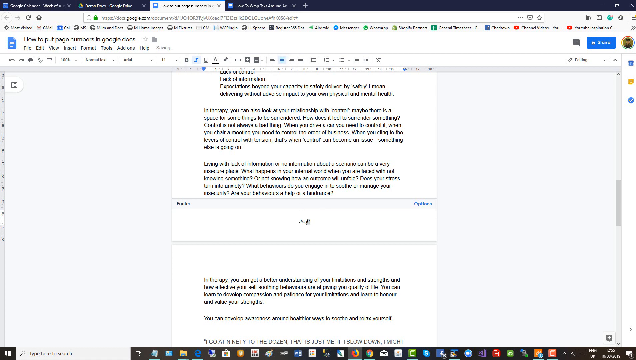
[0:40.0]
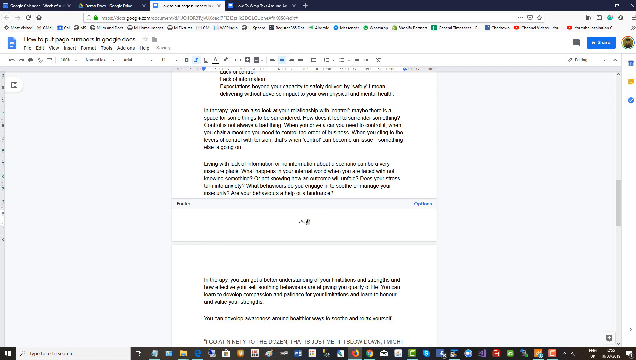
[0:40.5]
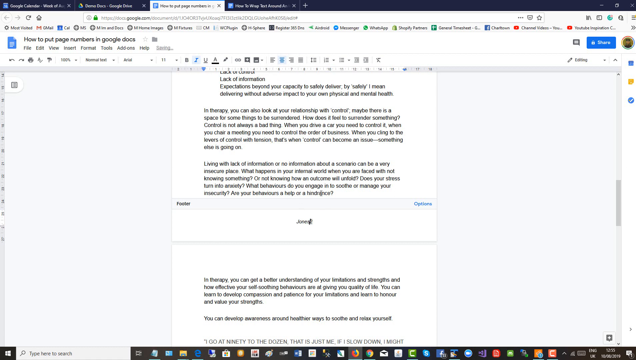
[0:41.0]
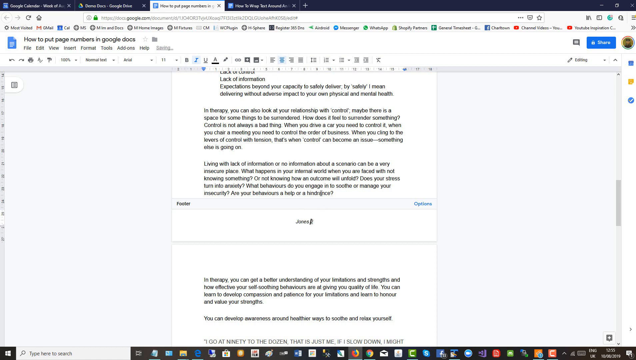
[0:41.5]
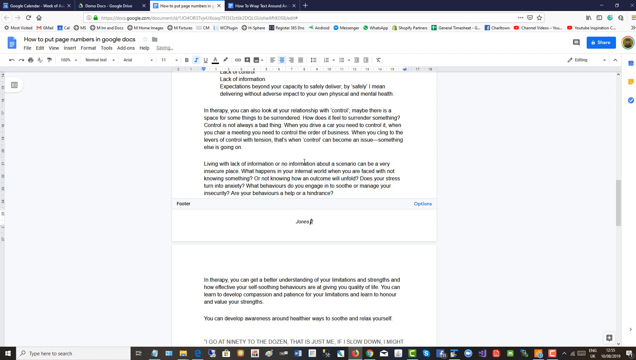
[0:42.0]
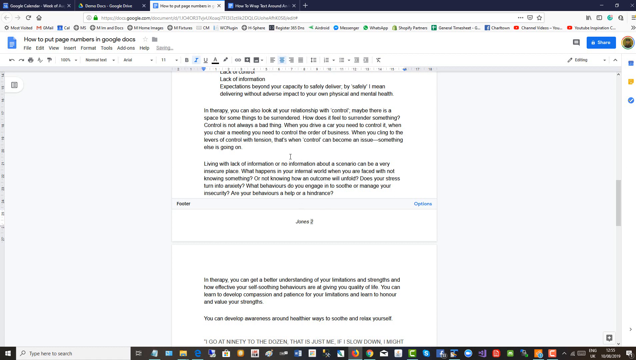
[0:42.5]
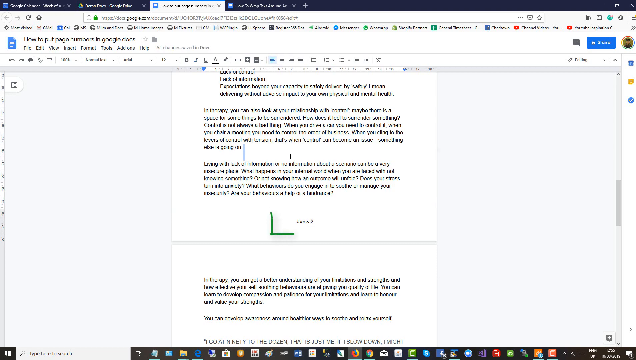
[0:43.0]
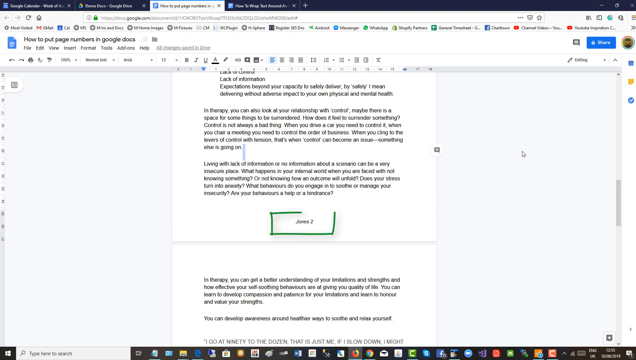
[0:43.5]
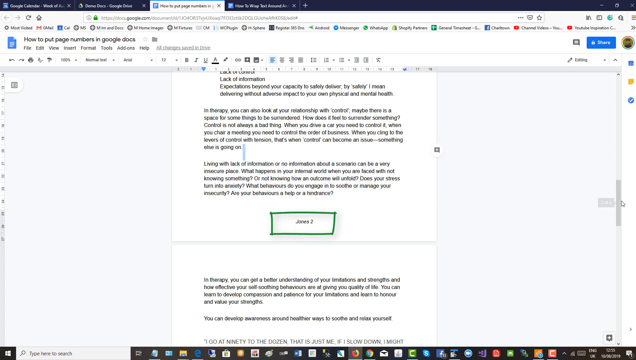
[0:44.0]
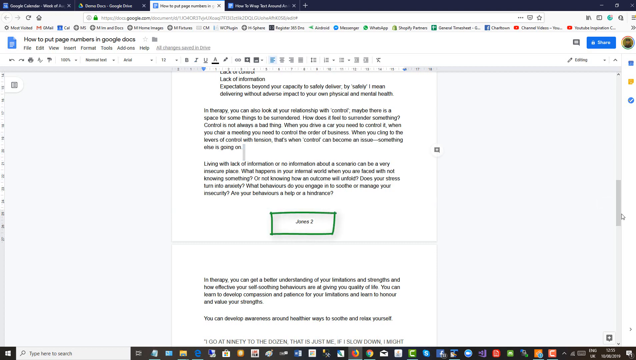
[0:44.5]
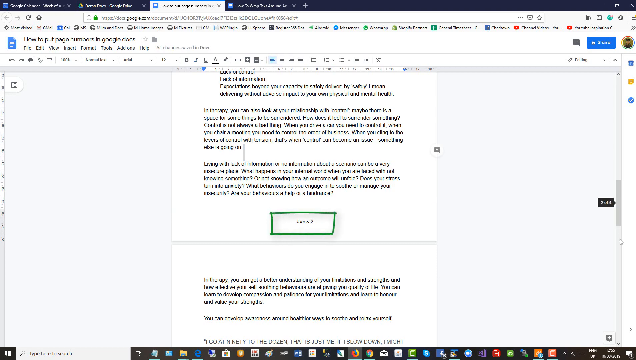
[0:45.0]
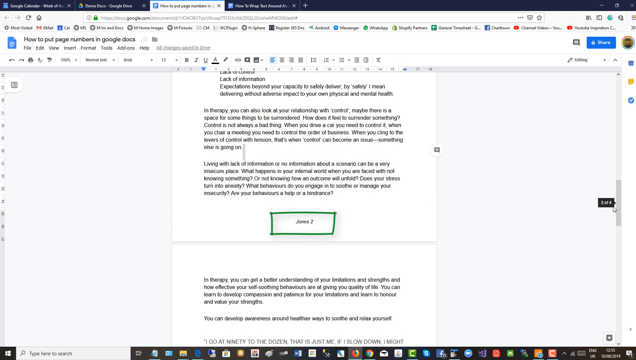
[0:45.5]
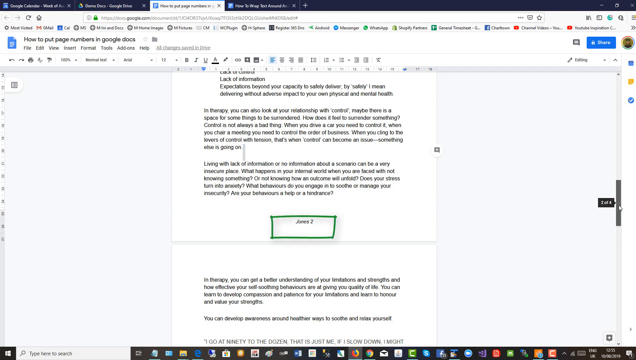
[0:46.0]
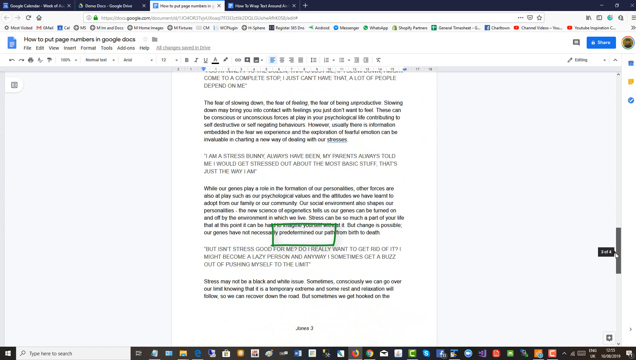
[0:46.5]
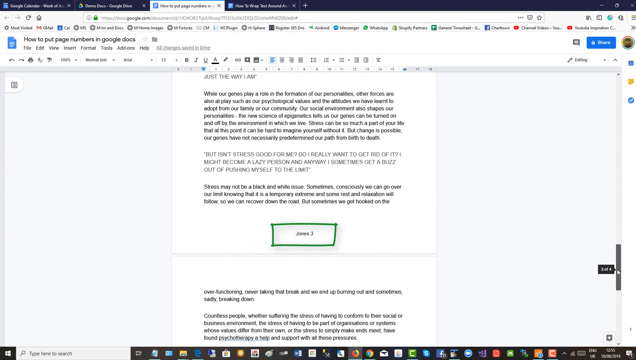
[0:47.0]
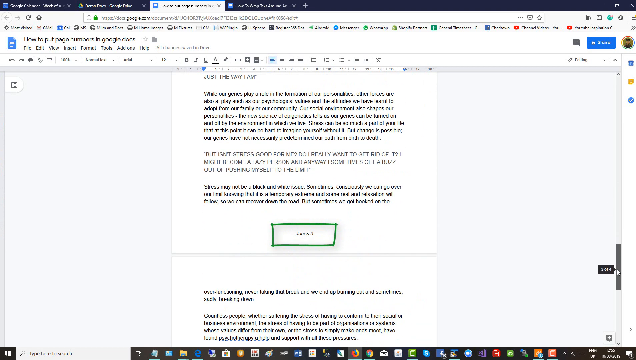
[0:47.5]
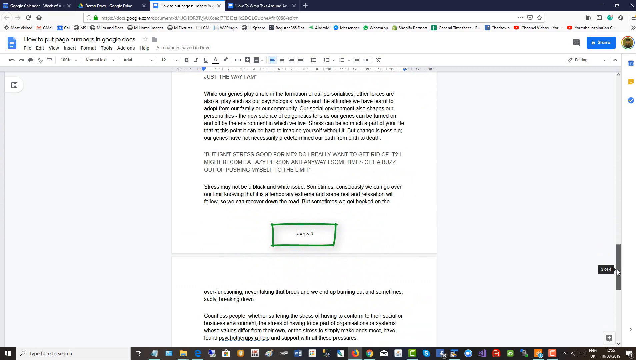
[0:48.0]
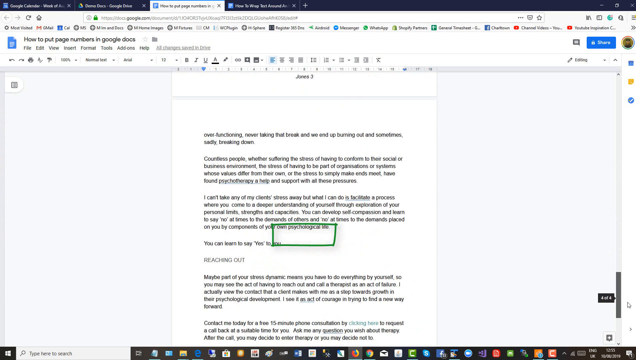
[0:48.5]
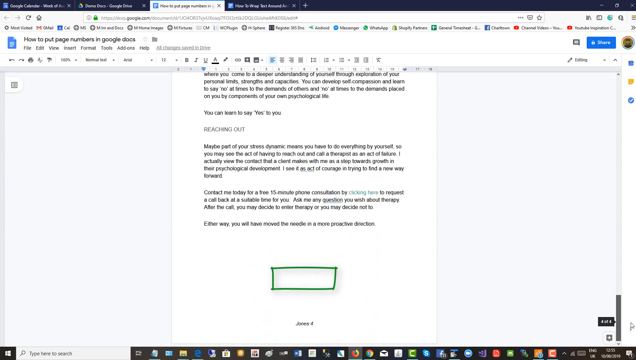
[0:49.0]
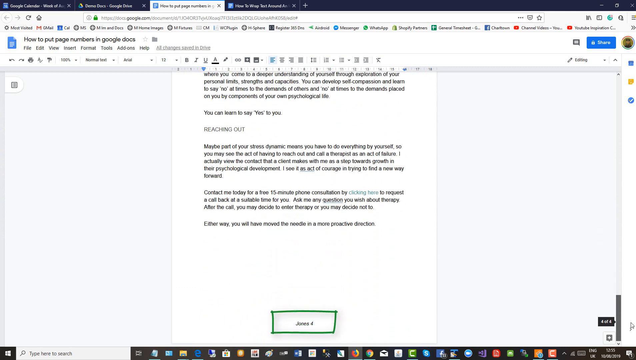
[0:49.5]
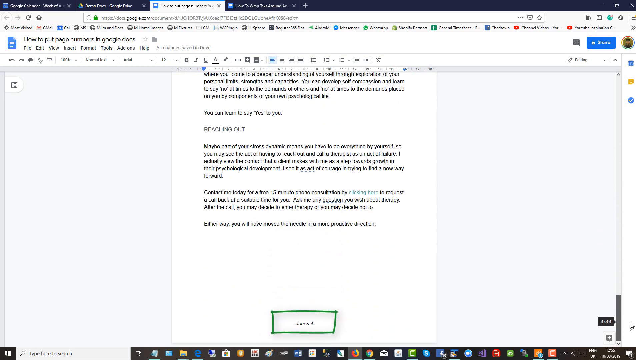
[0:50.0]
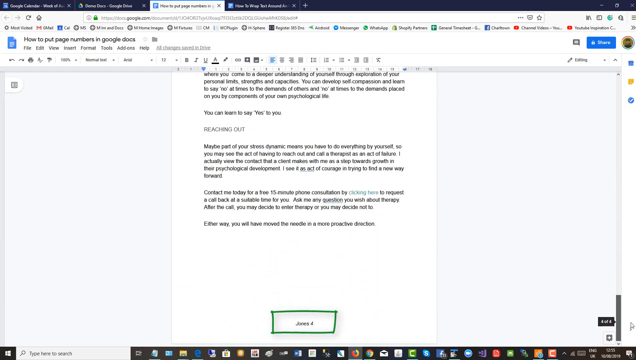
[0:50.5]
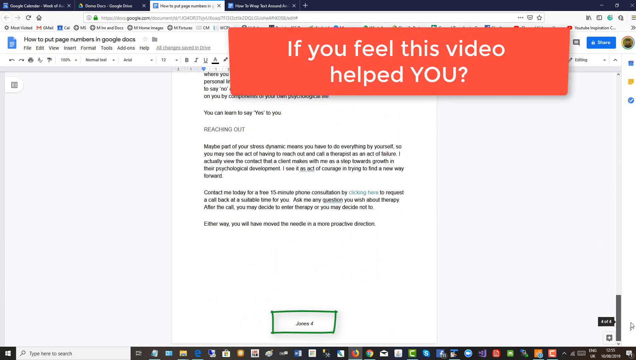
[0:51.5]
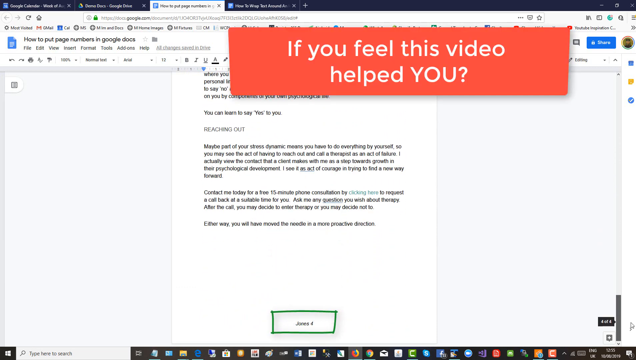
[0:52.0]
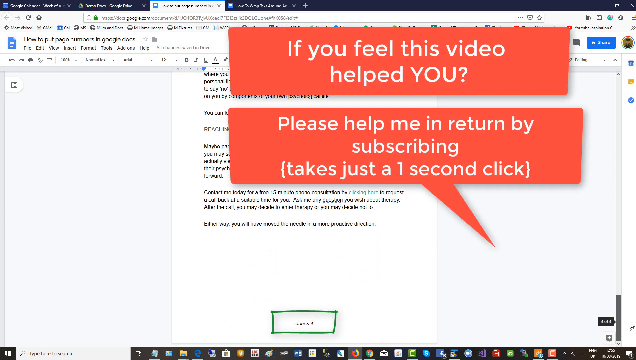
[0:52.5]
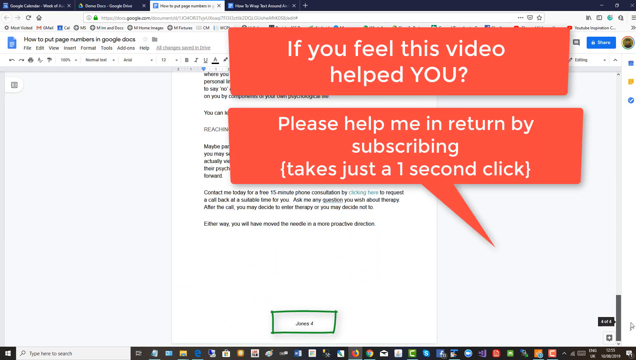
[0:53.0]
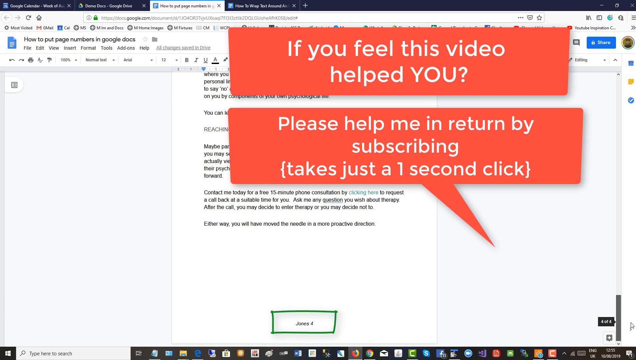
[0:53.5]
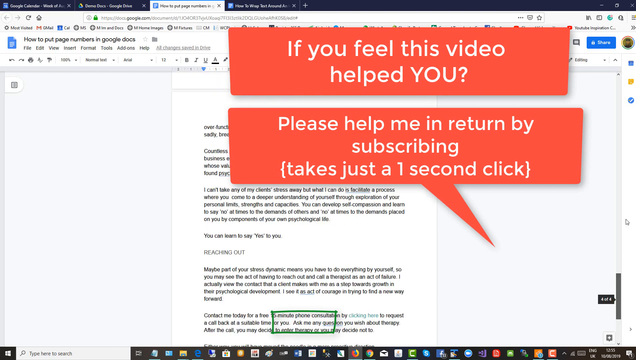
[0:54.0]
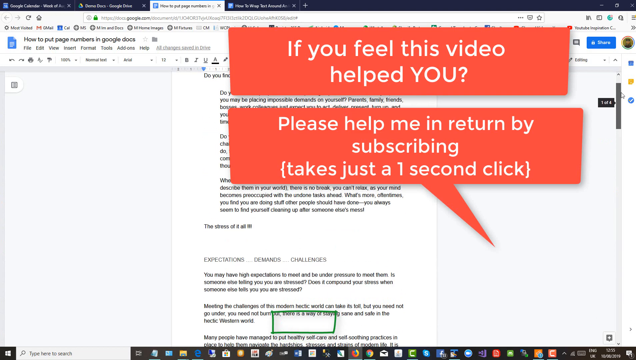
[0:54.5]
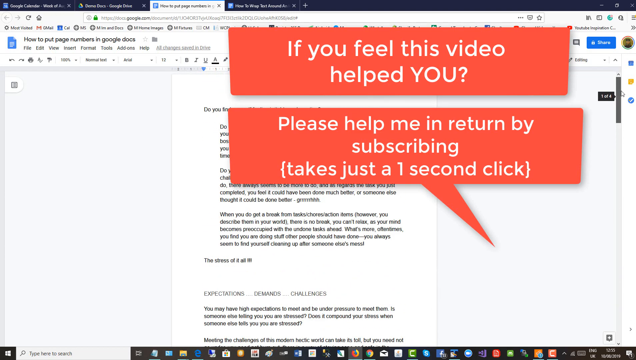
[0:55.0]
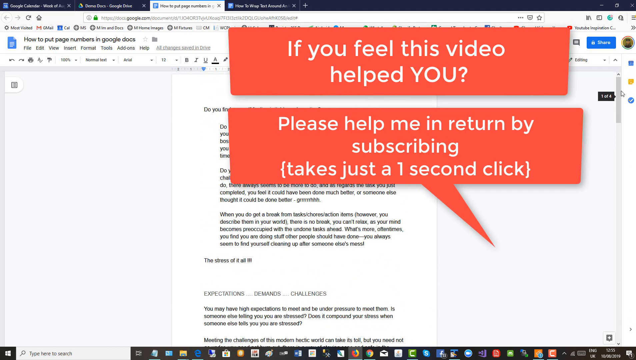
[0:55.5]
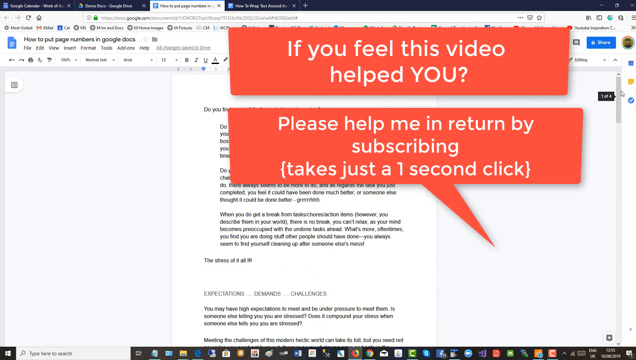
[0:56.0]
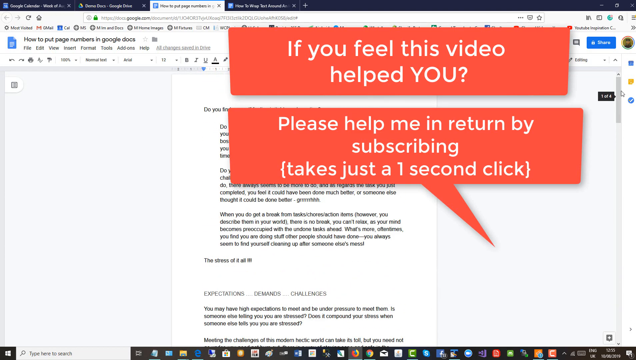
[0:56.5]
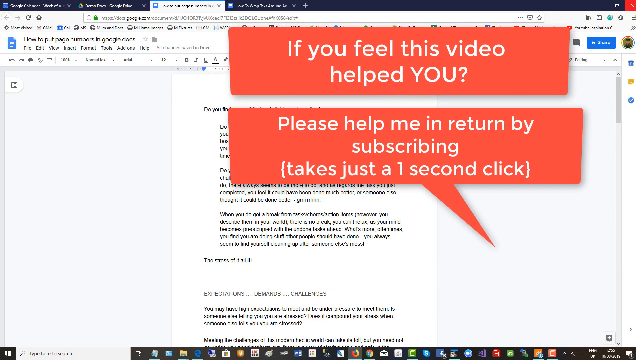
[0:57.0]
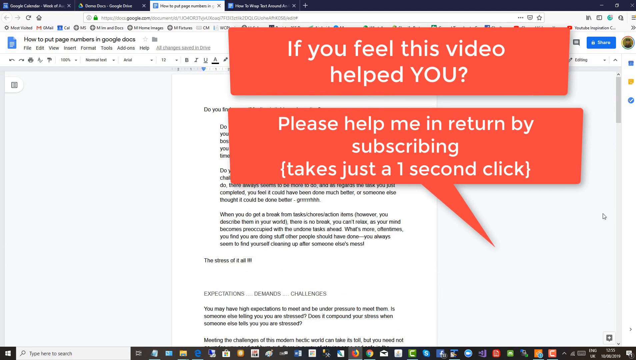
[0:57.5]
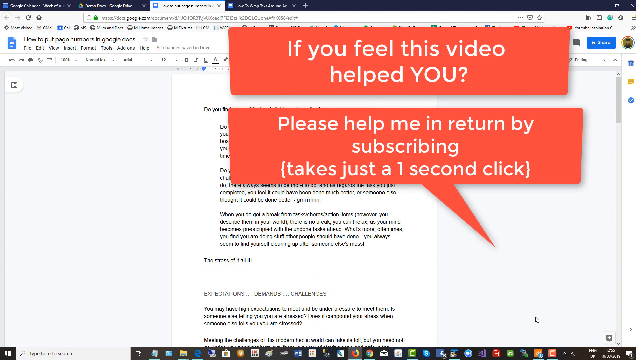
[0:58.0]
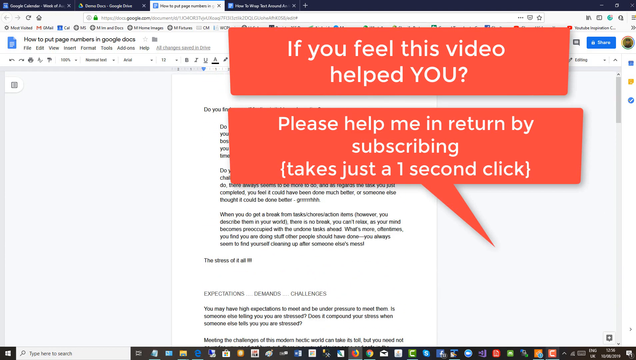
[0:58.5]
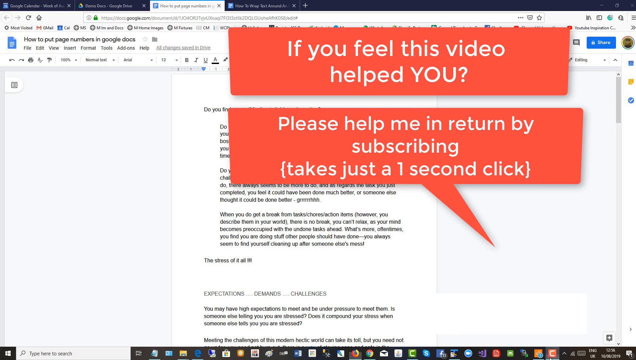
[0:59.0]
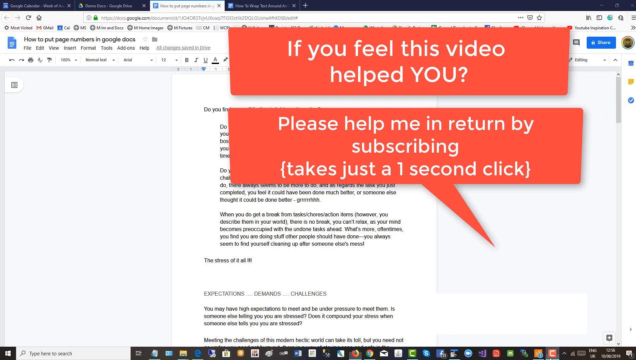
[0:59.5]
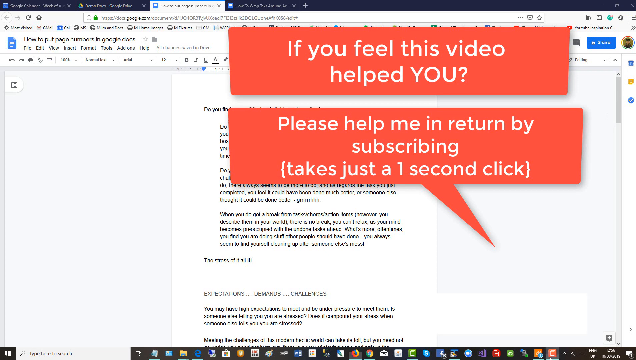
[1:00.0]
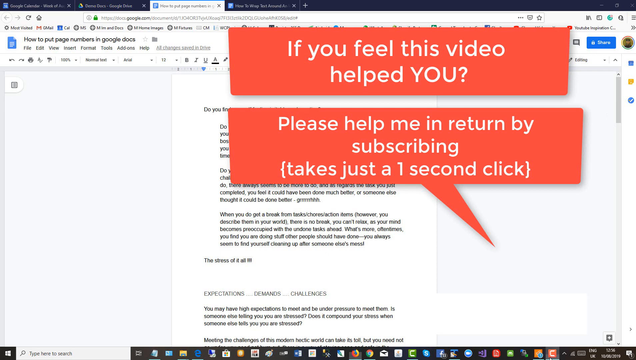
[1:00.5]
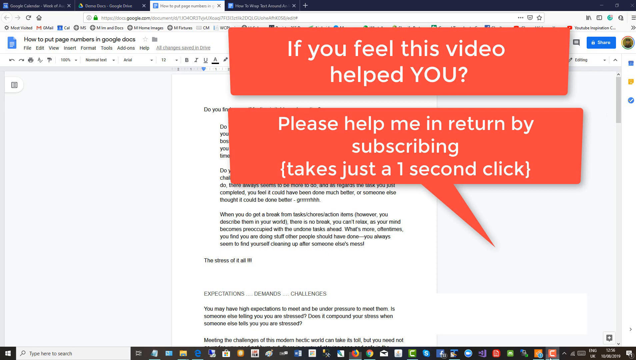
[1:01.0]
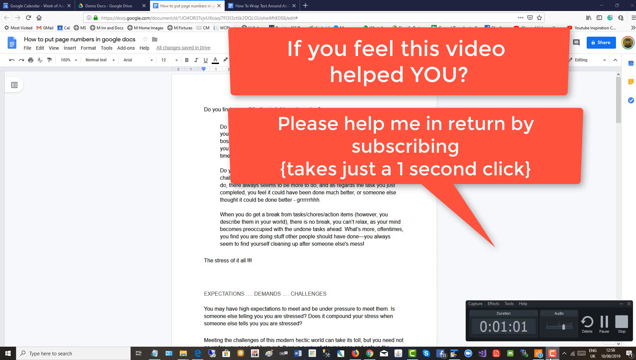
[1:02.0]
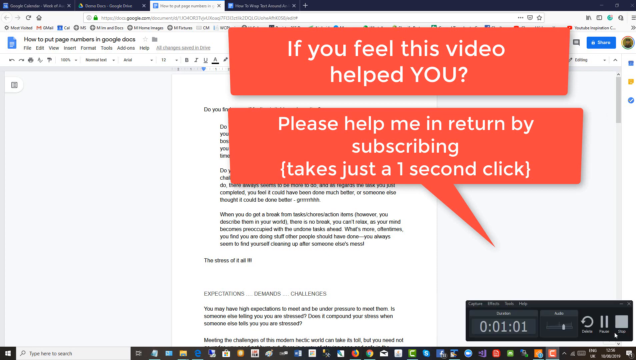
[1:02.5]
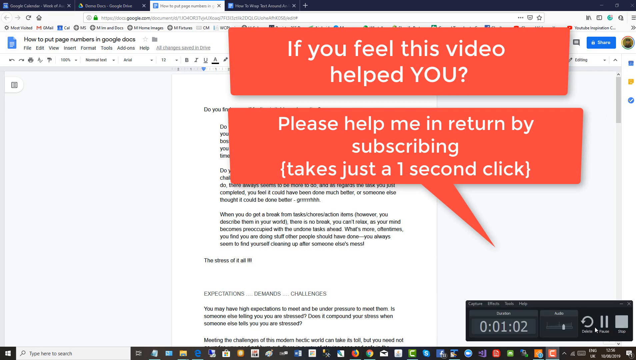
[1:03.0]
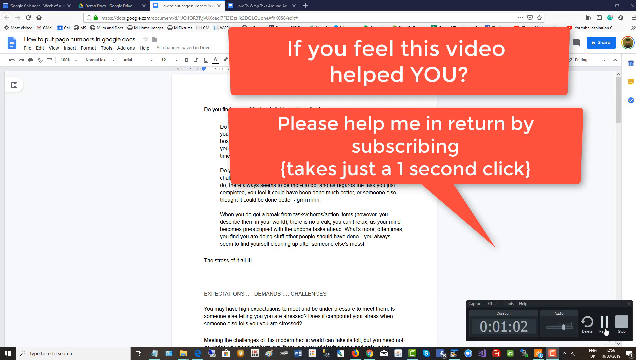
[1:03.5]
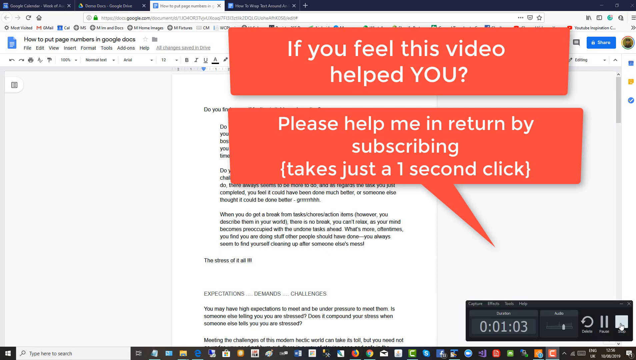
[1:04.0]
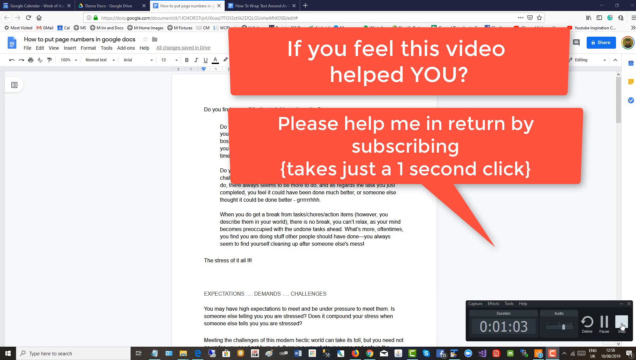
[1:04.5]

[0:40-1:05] The person customizes the page numbers by typing some gibberish as an example of text to put before the page number. Near the end, it appears this might be a YouTube tutorial on aligning page numbers: the person asks viewers to subscribe to their YouTube channel and then asks whether the alignment is correct and whether viewers are satisfied with the video.